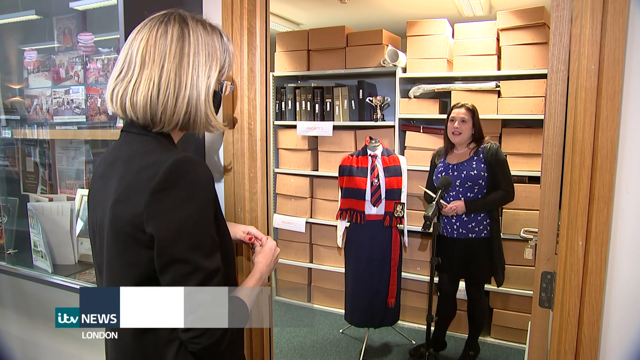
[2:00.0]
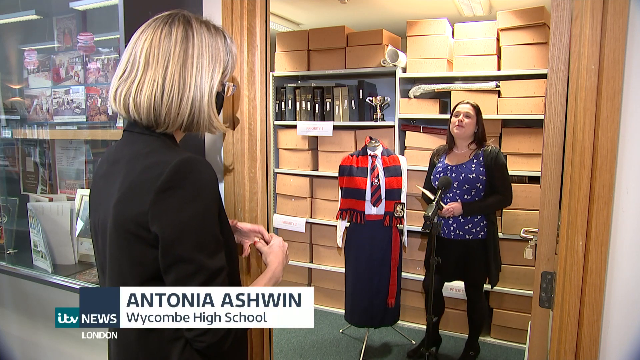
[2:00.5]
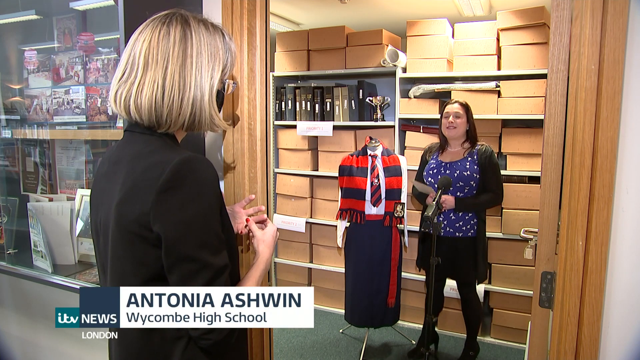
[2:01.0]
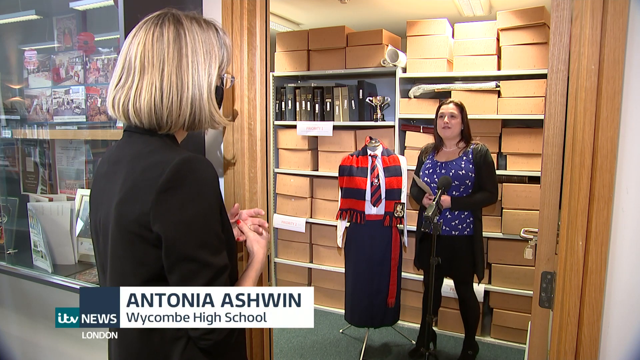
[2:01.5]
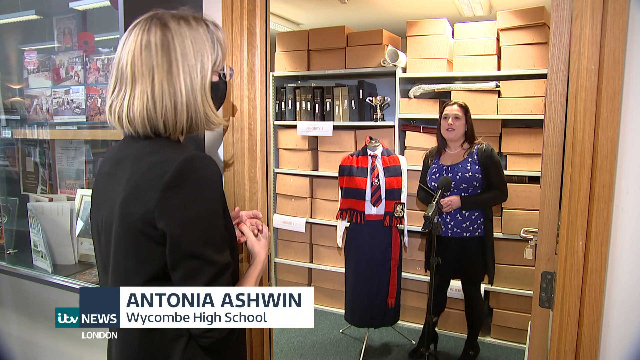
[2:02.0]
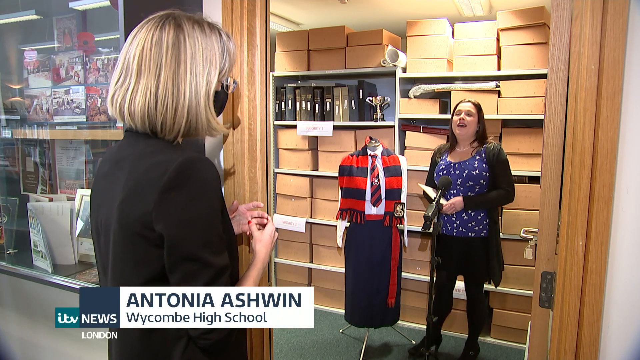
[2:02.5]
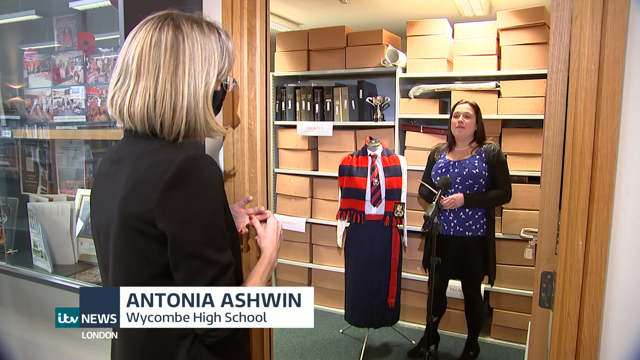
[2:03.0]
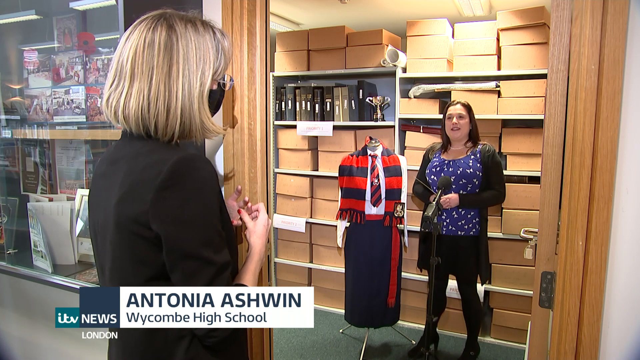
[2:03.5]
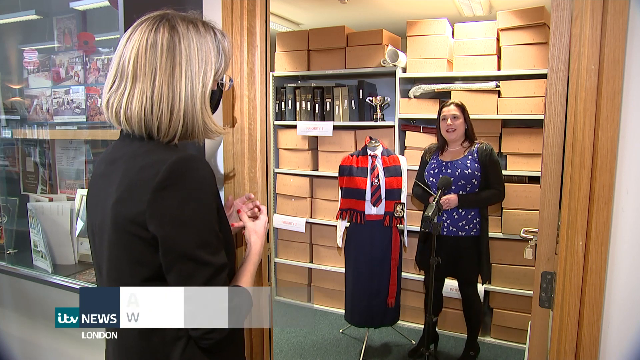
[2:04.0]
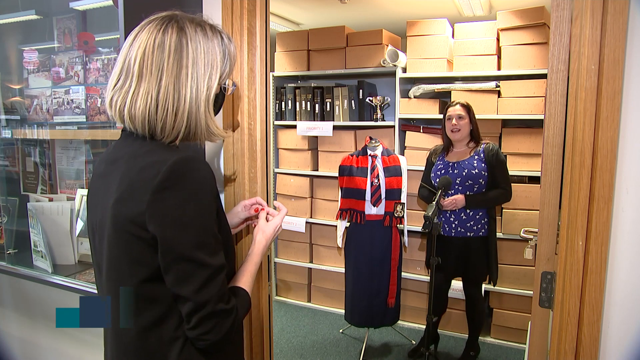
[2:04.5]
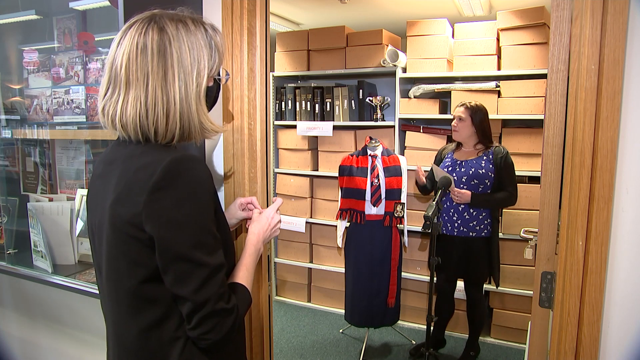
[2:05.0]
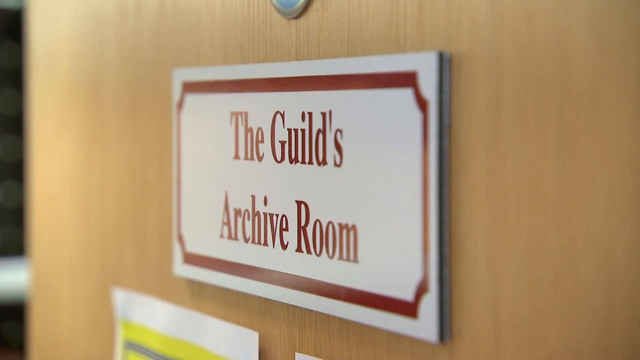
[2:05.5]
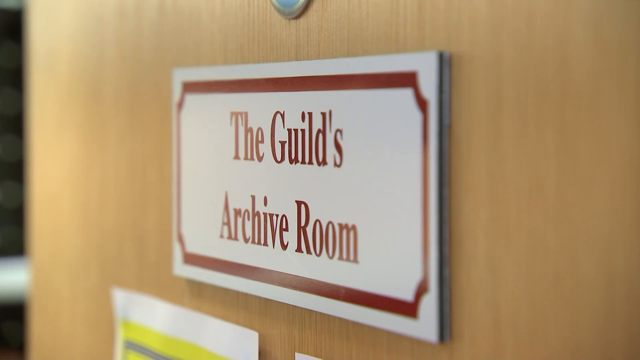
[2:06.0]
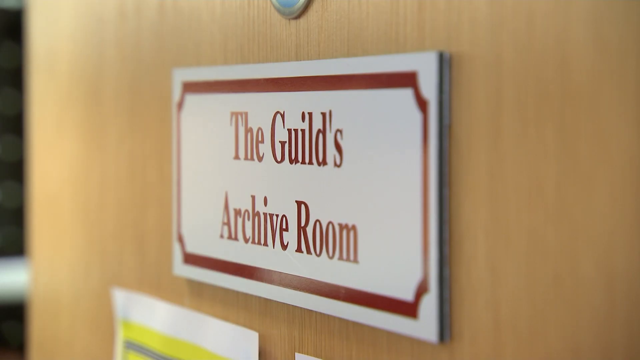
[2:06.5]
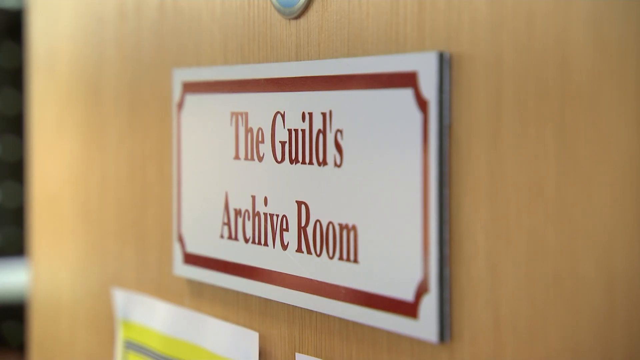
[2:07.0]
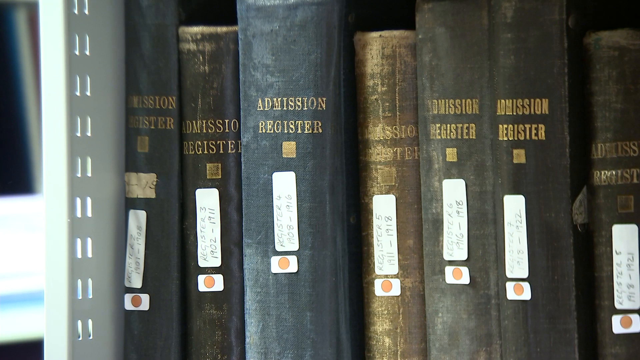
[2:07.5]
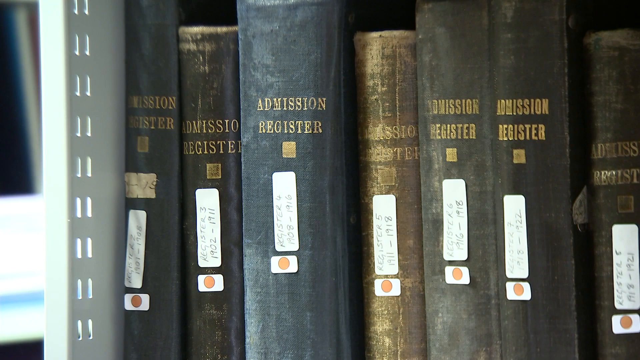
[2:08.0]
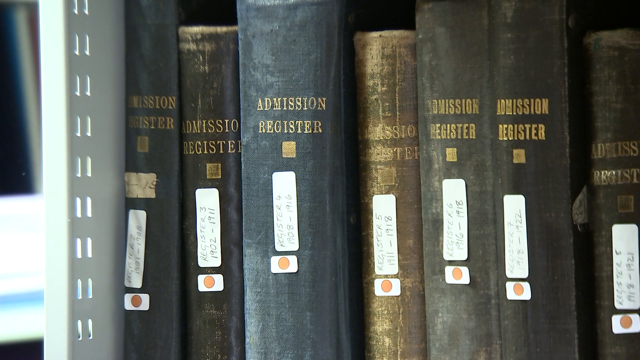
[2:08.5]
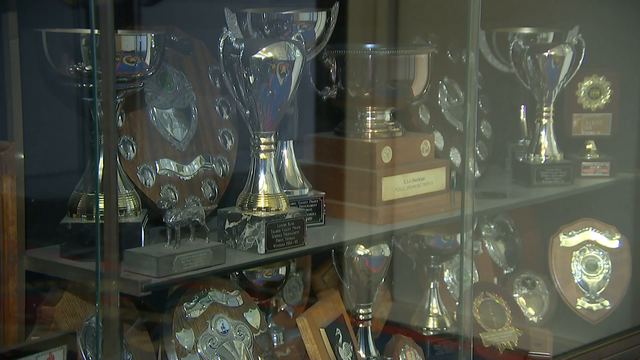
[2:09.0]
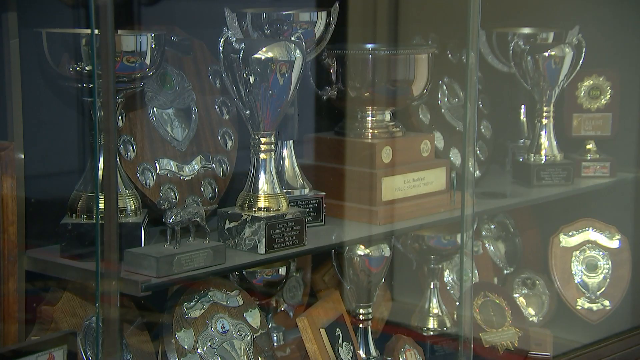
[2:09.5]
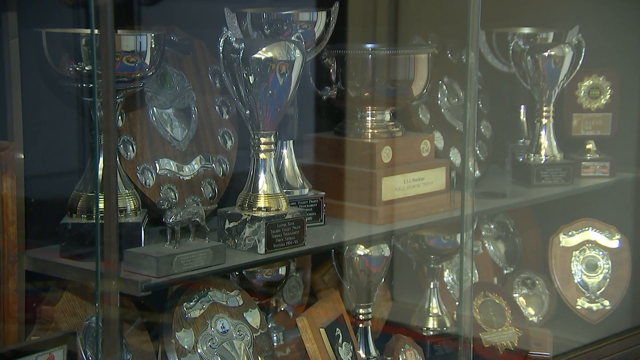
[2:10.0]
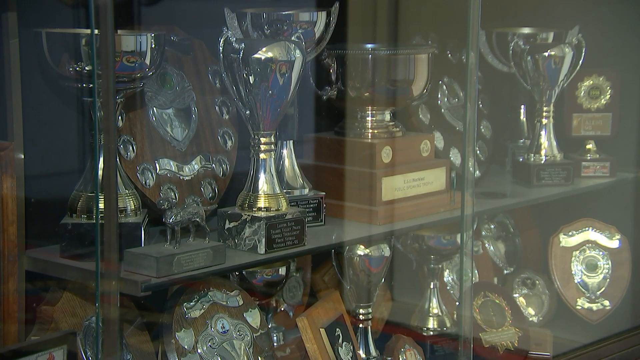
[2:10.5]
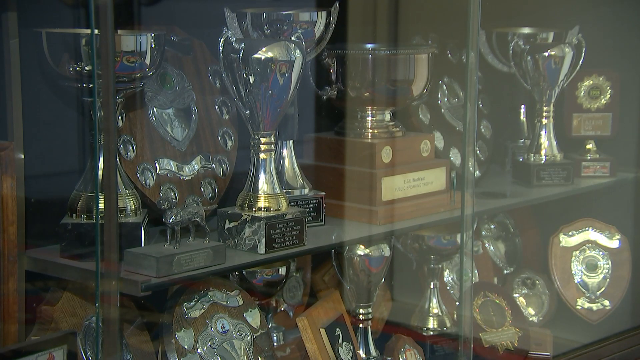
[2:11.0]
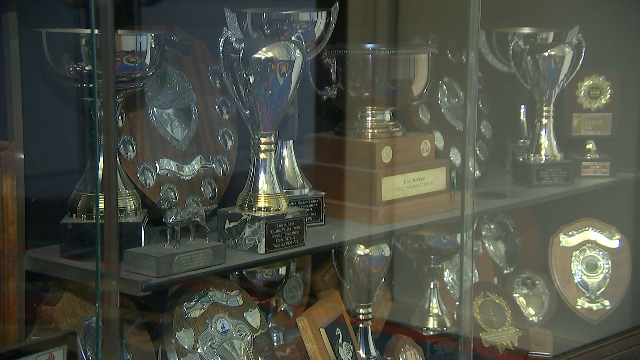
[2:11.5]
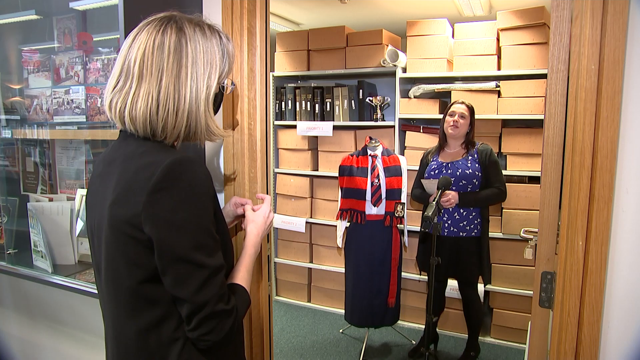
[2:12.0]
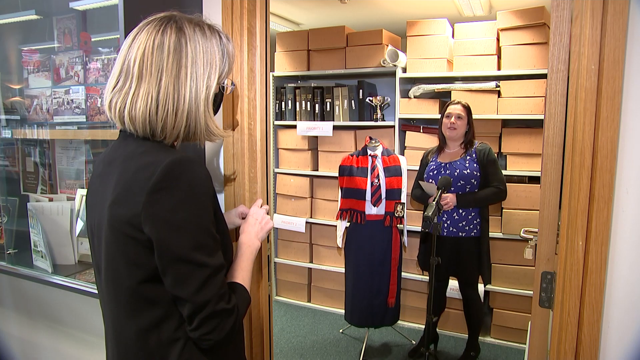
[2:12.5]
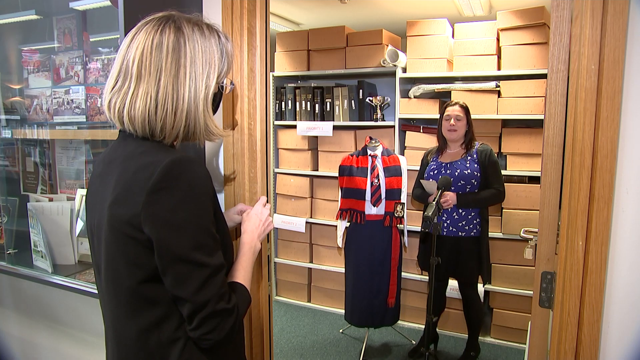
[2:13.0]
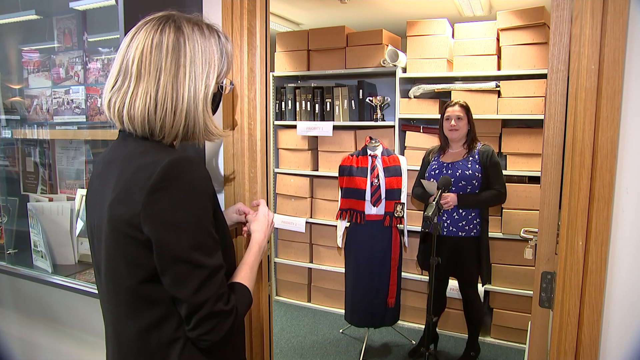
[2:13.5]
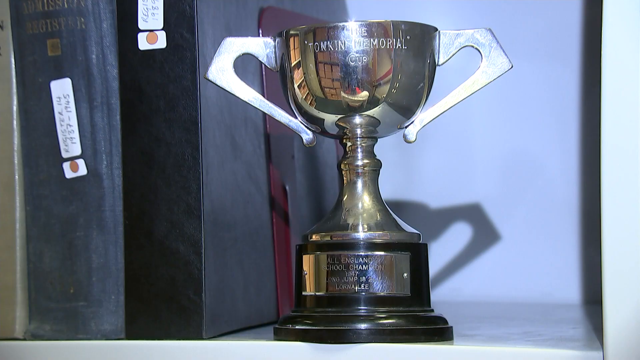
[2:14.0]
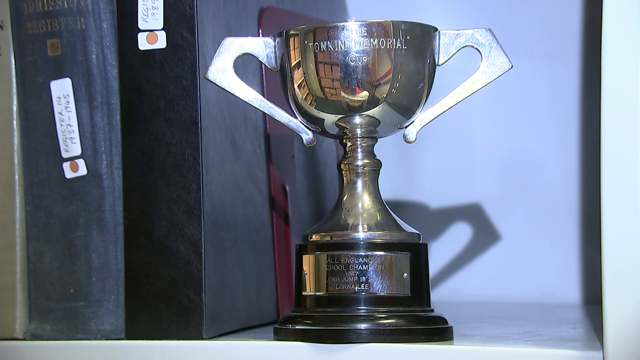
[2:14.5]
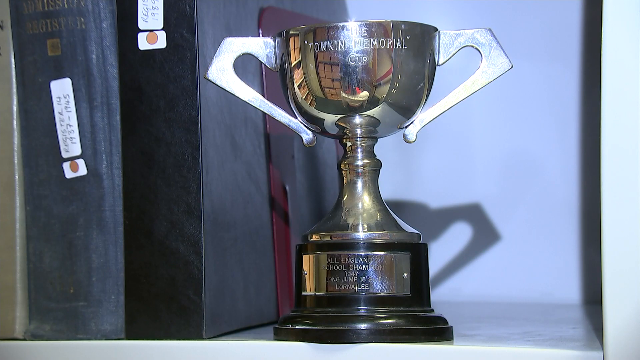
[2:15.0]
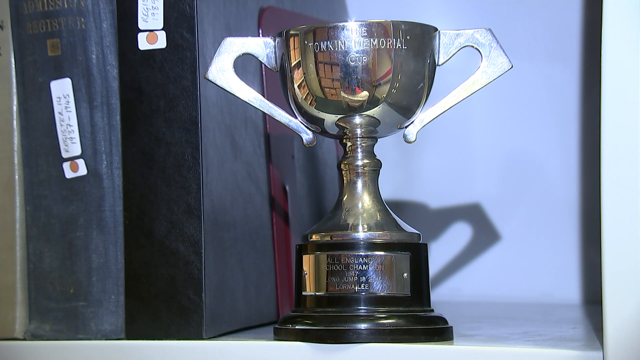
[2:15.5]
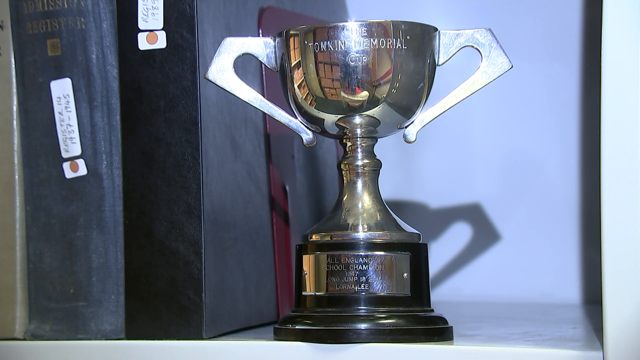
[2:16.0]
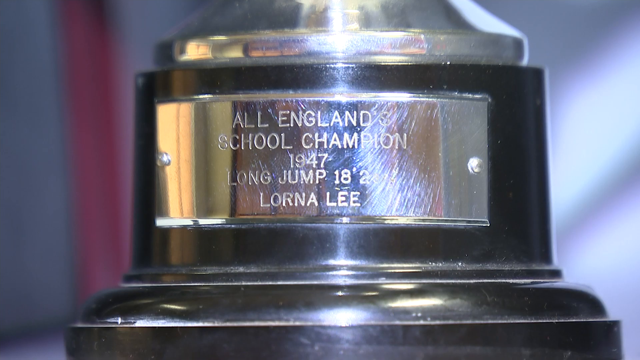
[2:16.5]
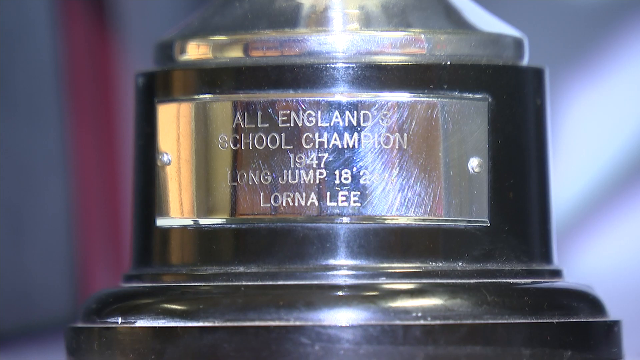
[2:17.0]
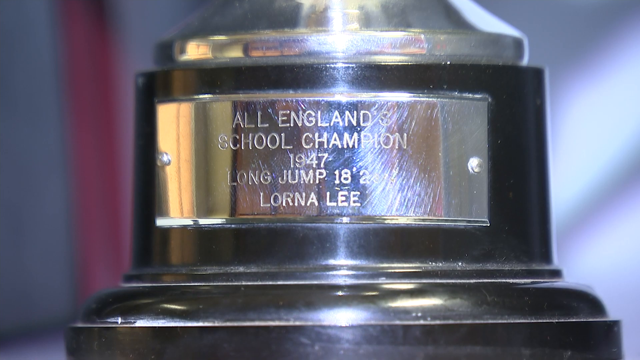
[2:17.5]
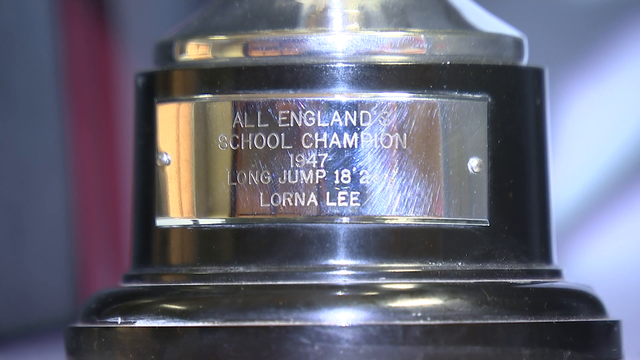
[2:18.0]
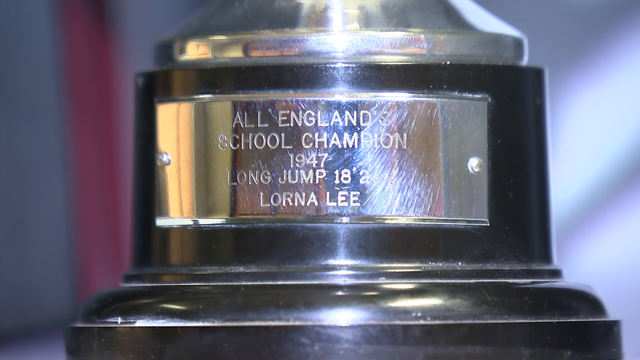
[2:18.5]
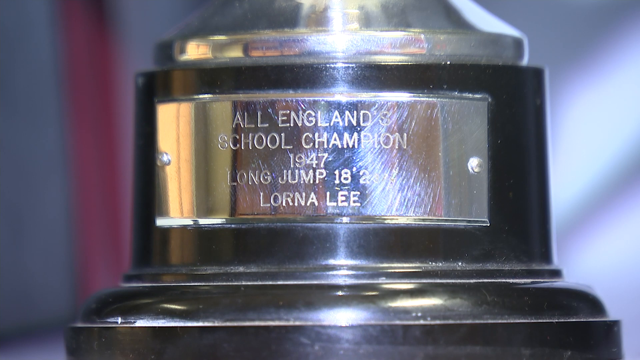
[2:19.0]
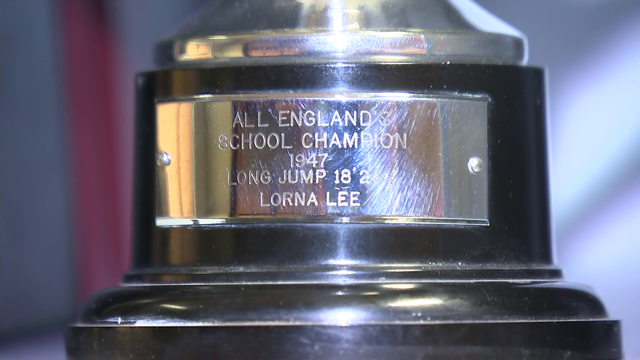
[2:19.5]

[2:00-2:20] Two women talk; one wears a mask and one does not. One is blonde and one is brunette. The brunette wears a blue top, black pants and a cardigan. The blonde woman wears a black blazer and red nail polish; her name is Antonia Ashwin, of Wycombe High School. They are apparently doing an interview. A cabinet is labeled "the Guides Archive Room." Admission register books are shown, and a bunch of trophies are in a glass case. The two women continue talking, and then the main trophy, apparently the one the older woman needs to borrow, is shown: the Topkin Memorial Cup, inscribed "All England School Champion 1947 long jump 18 feet. Lorna Lee."